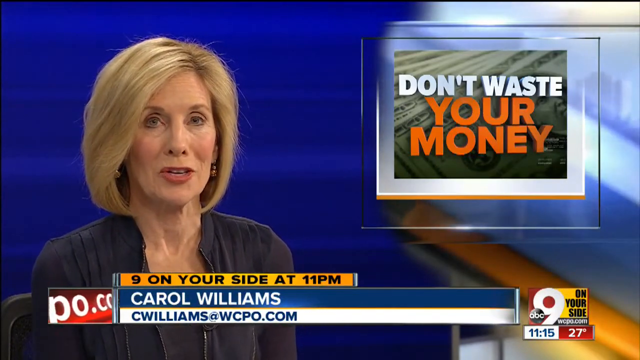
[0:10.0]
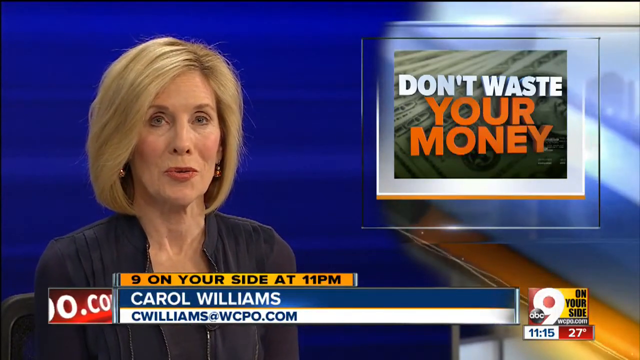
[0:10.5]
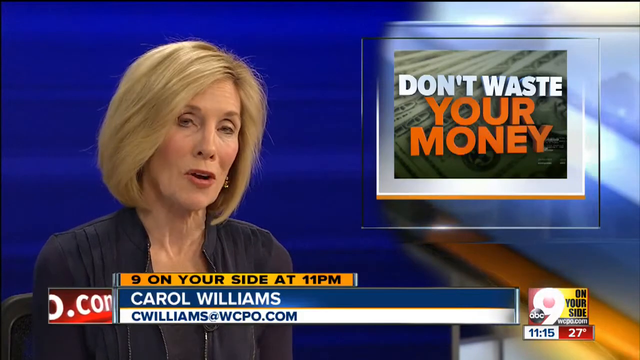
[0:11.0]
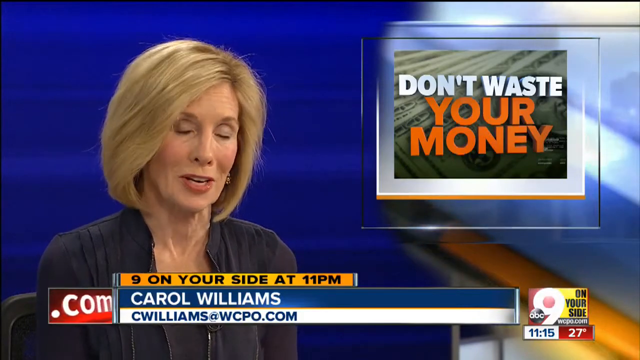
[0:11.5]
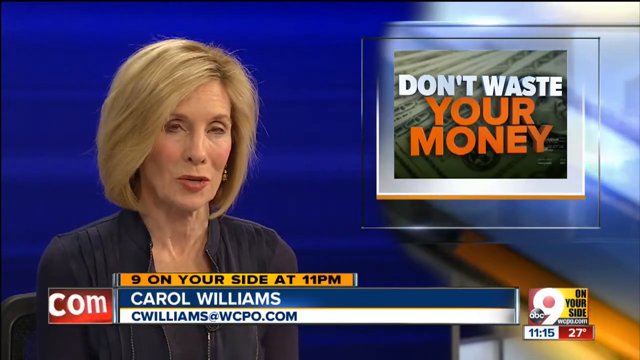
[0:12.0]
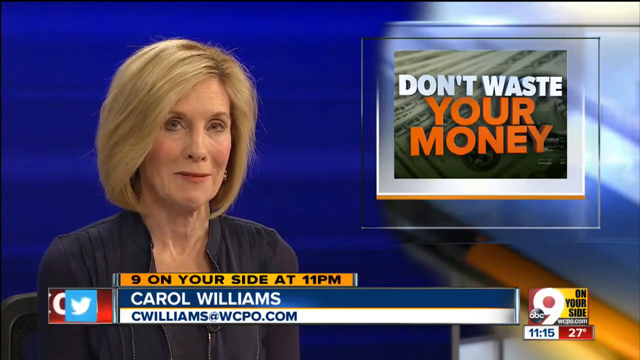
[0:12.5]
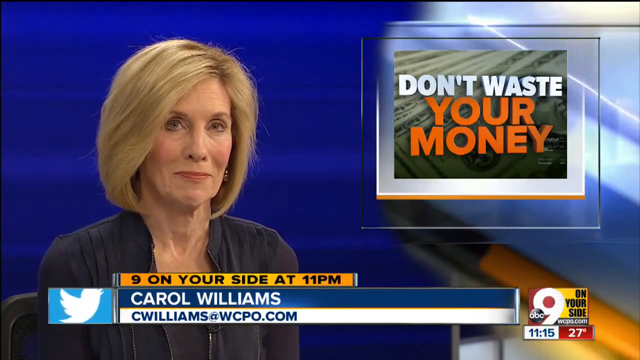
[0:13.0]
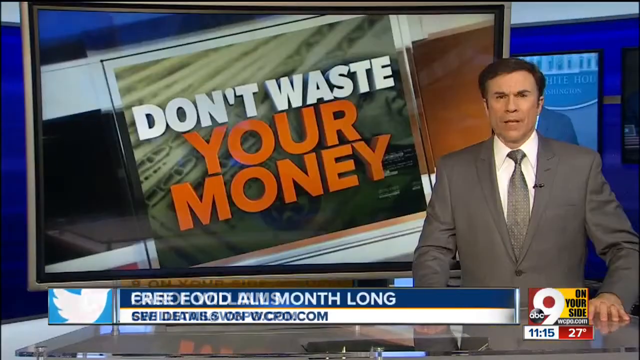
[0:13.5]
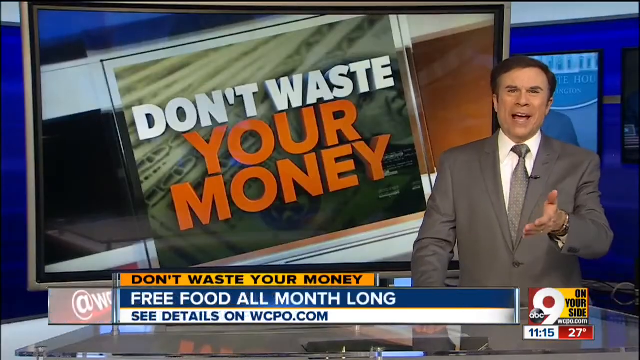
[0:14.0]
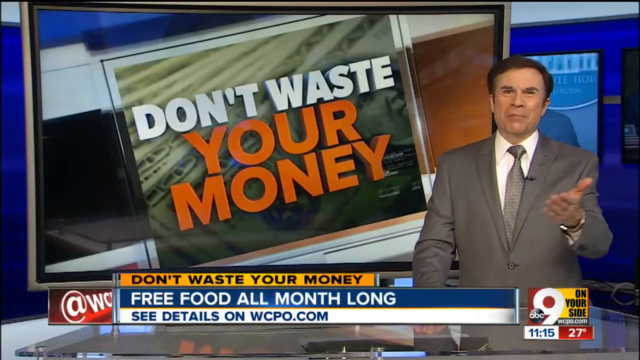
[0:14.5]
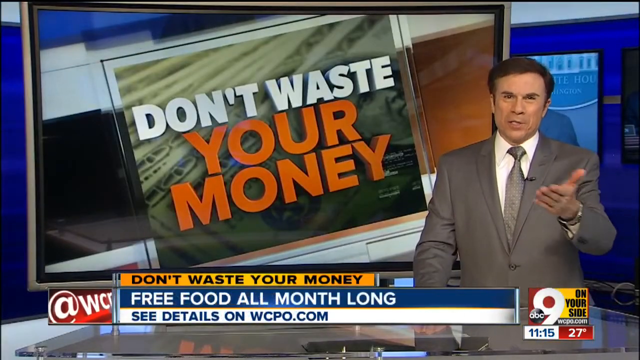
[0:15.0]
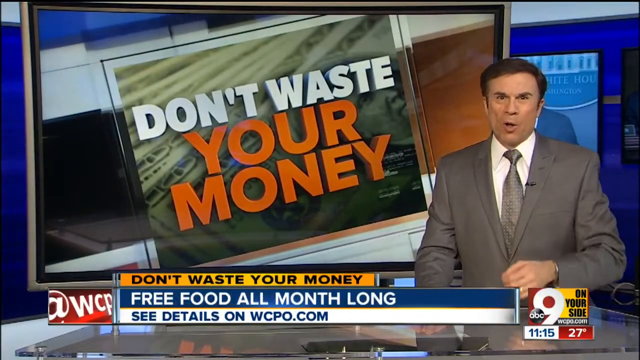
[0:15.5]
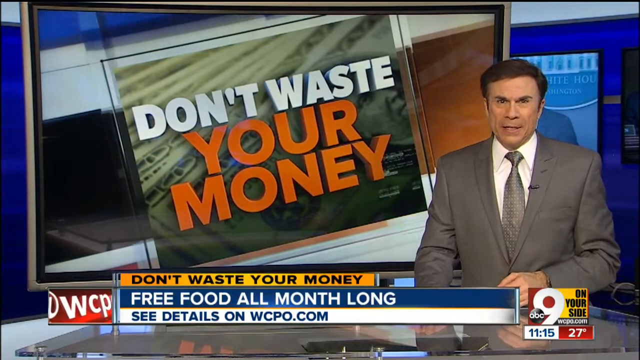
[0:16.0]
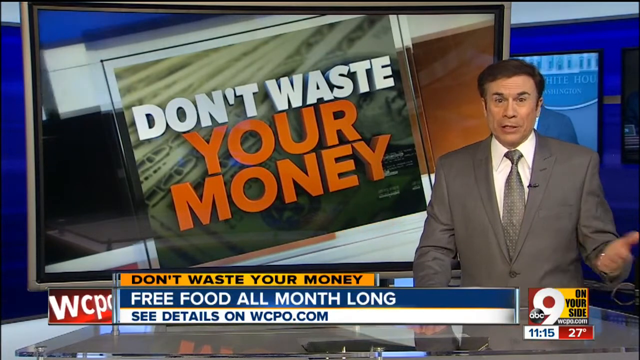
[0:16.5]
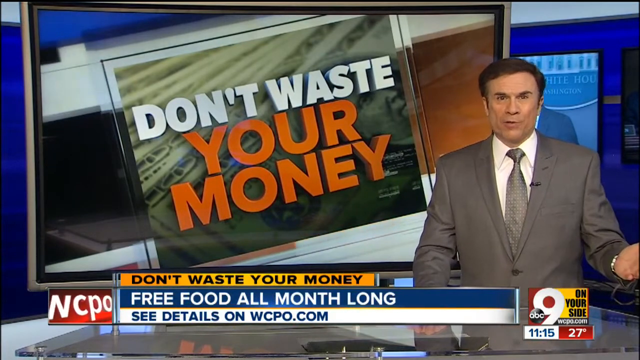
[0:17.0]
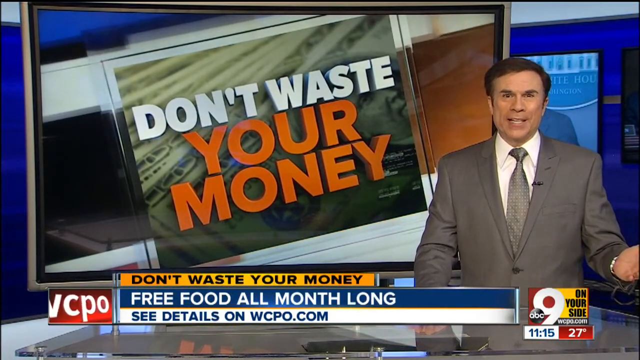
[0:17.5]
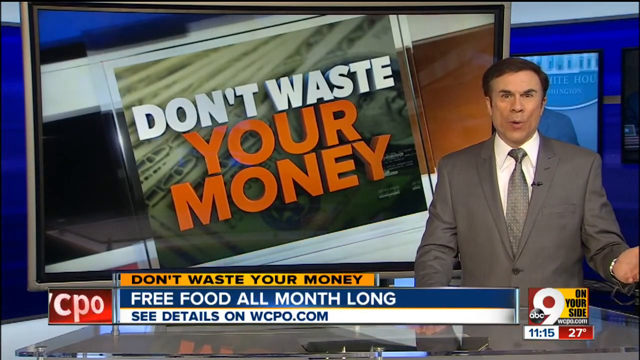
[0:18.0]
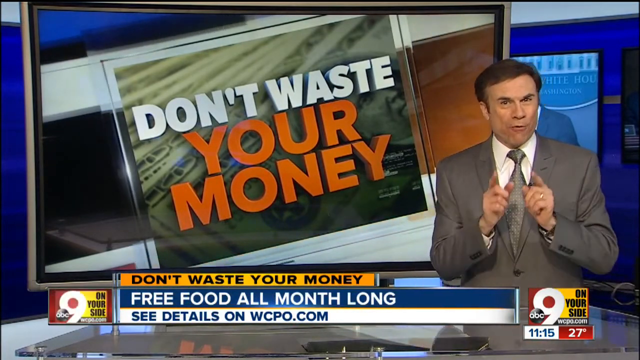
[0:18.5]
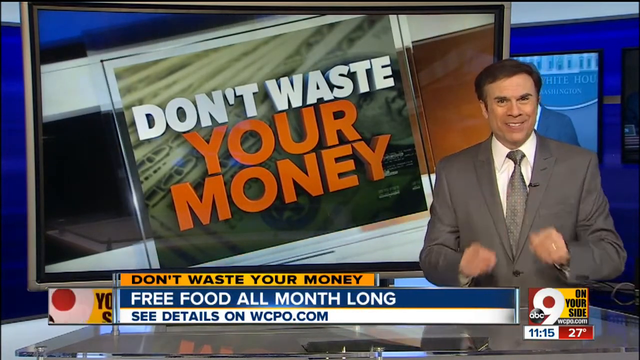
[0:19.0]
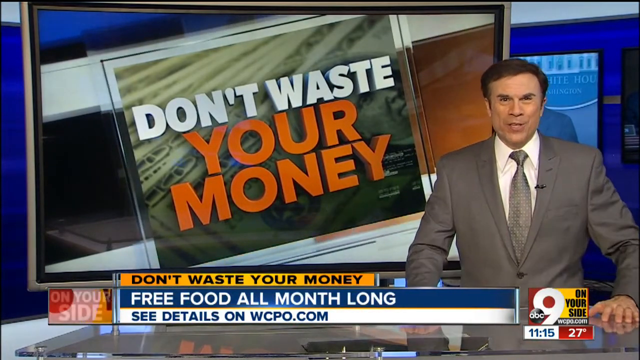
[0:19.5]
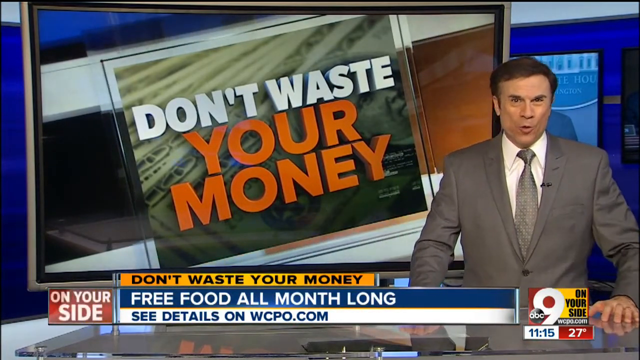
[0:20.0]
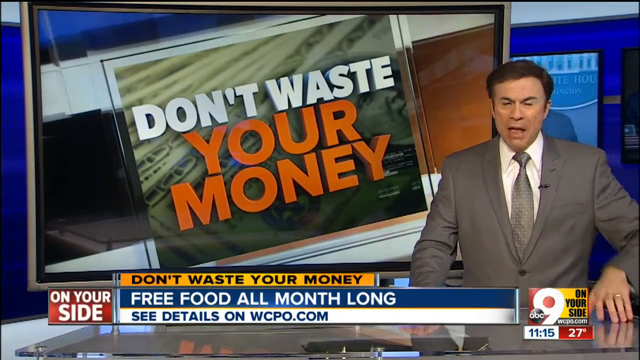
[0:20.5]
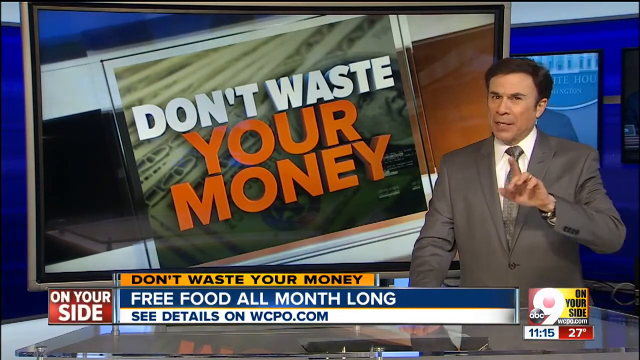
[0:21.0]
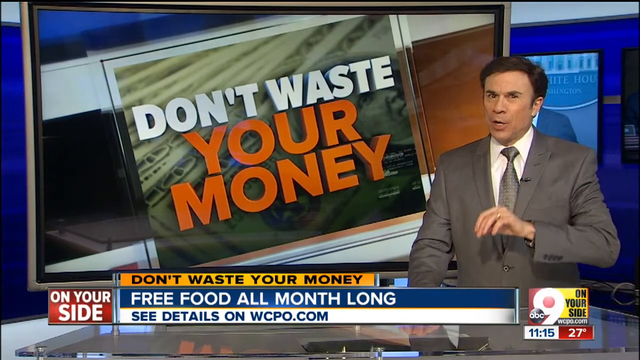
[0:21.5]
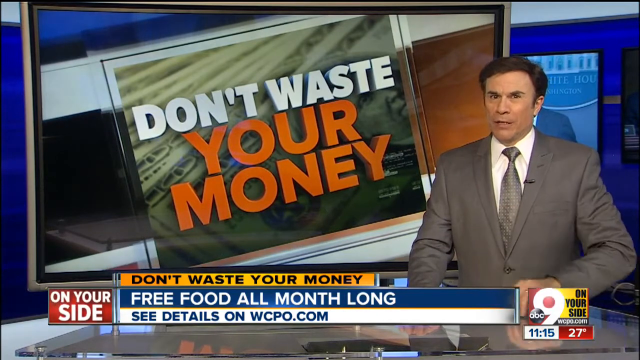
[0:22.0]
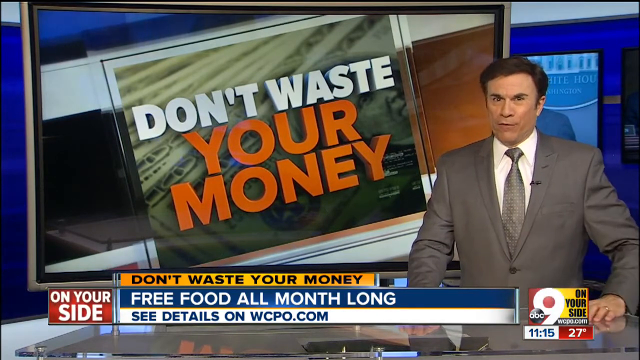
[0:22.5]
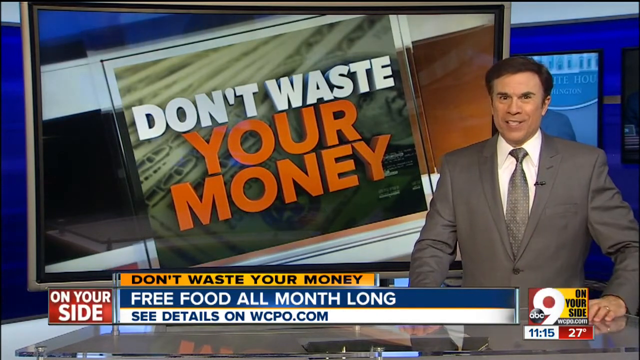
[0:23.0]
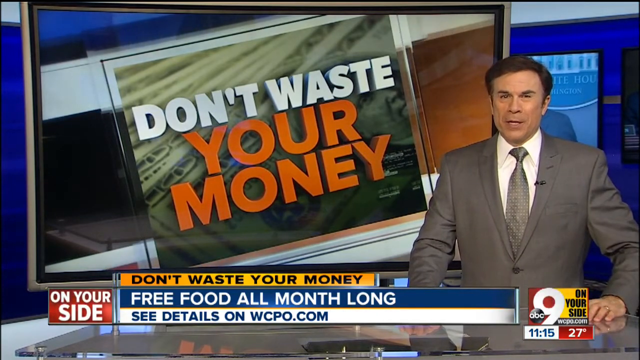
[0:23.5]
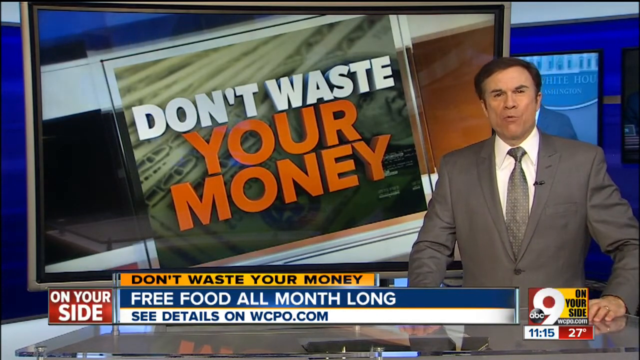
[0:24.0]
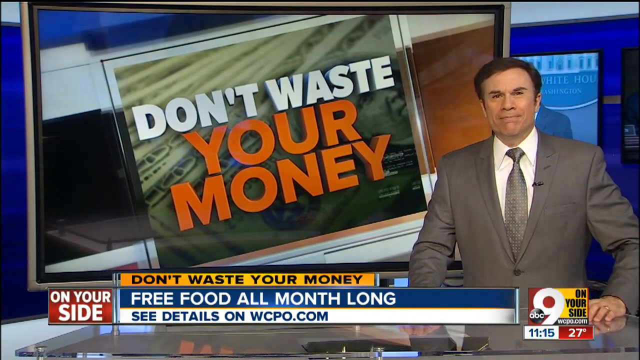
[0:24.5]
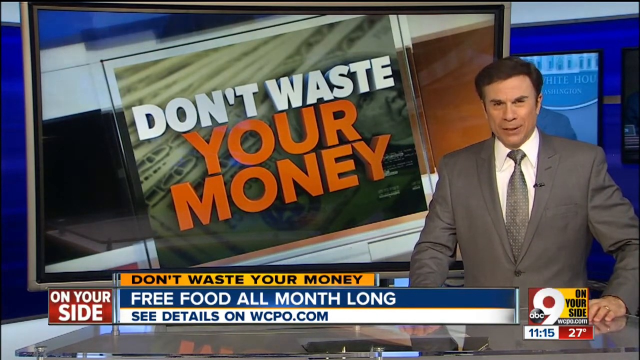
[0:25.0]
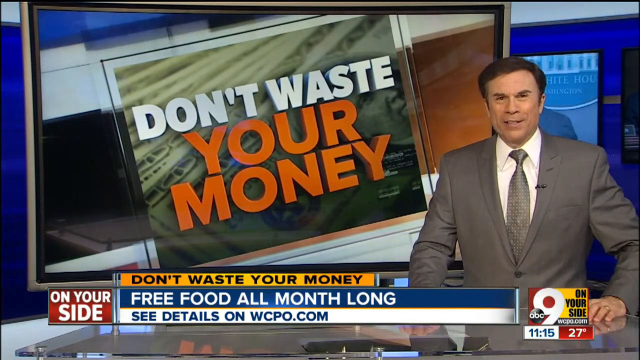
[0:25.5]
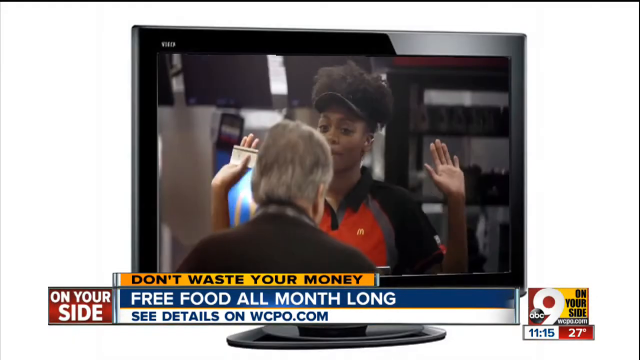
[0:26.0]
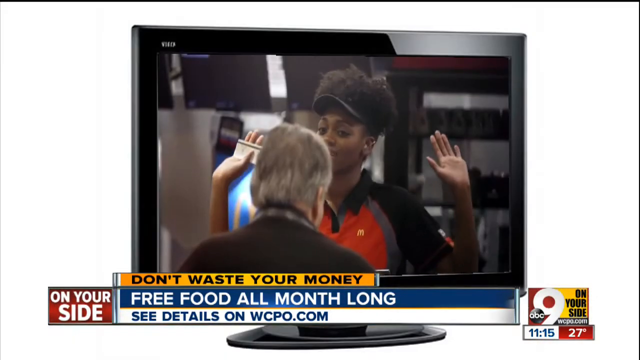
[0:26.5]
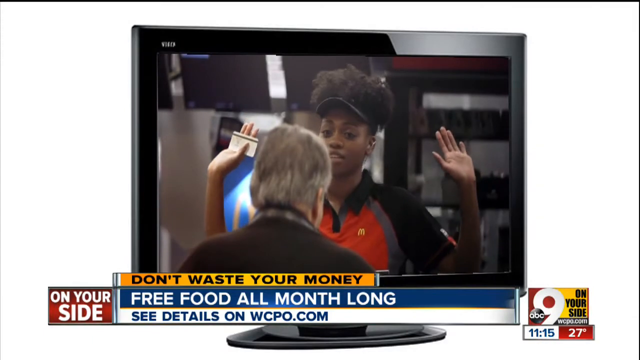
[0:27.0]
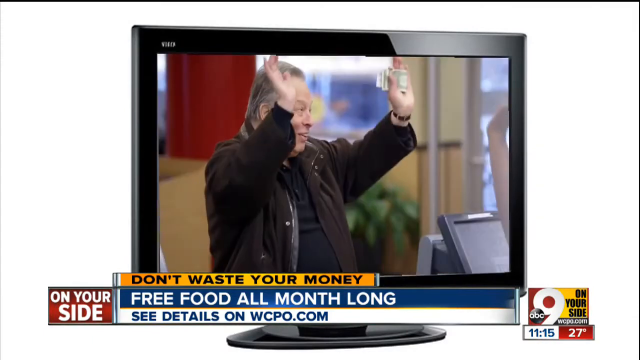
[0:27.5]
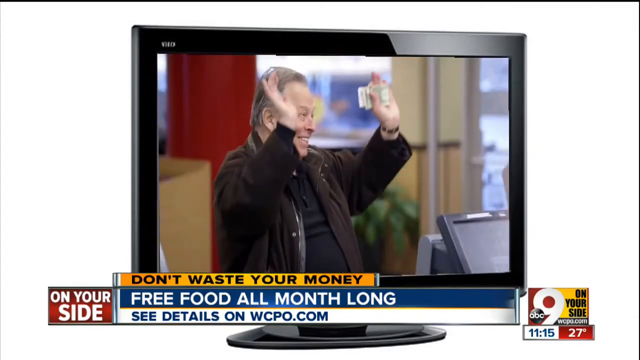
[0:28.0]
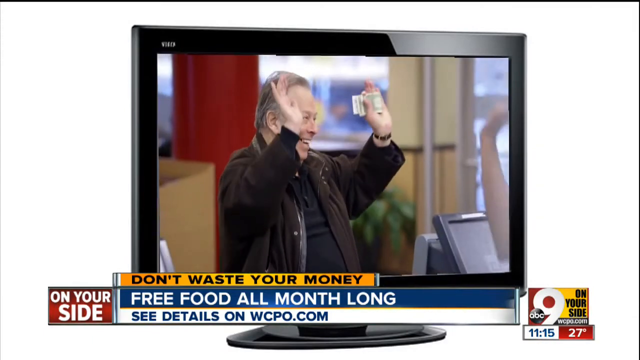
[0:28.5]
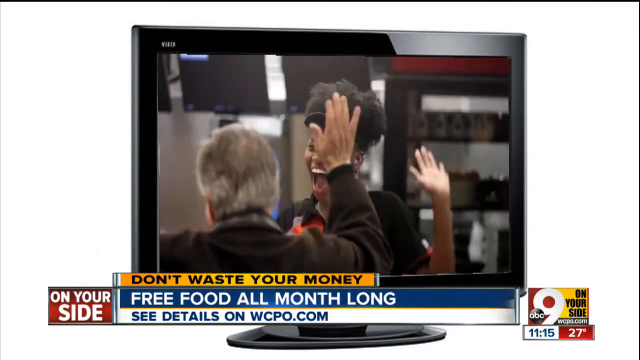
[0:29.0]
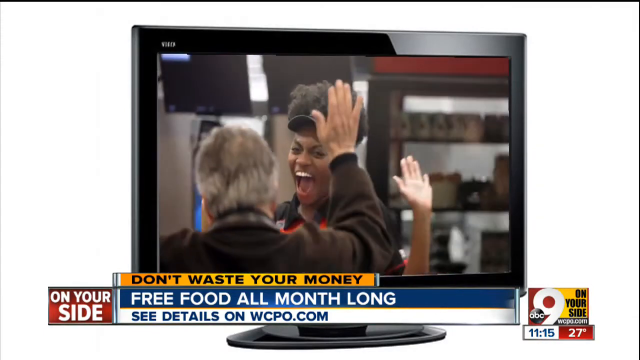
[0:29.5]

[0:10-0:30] On-screen text reads "don't waste your money, free food all month long, see details on wcpo.com." Two women talk to each other, and later they look very happy and raise their hands. Another man does the same and looks very happy.